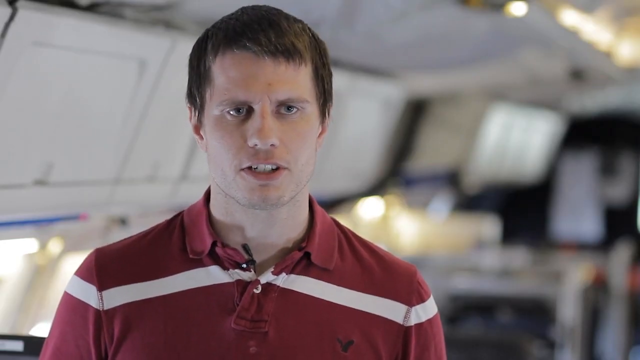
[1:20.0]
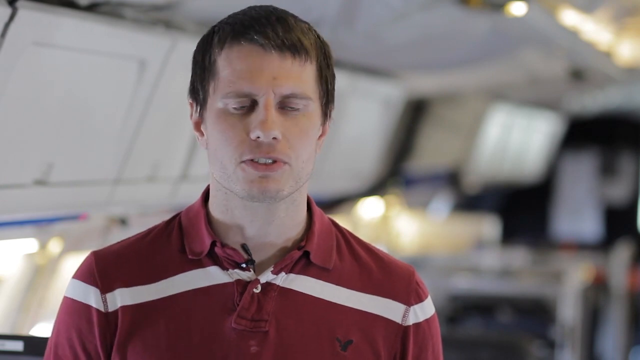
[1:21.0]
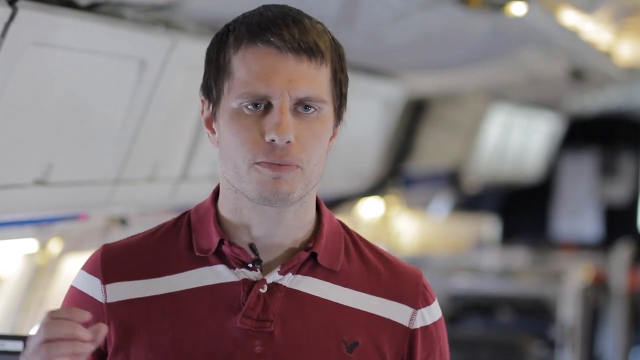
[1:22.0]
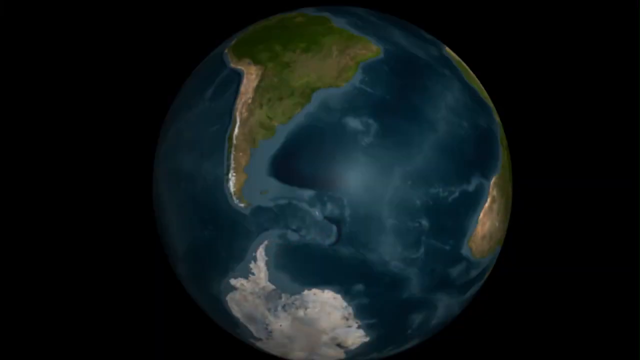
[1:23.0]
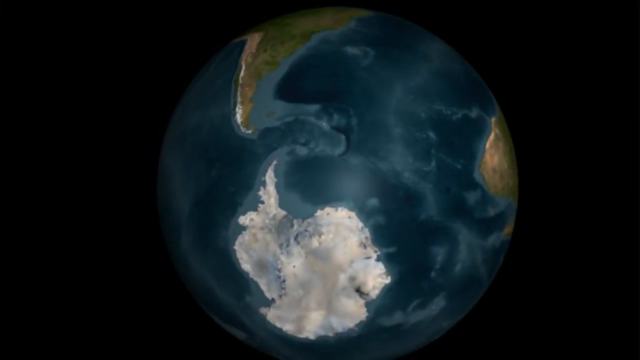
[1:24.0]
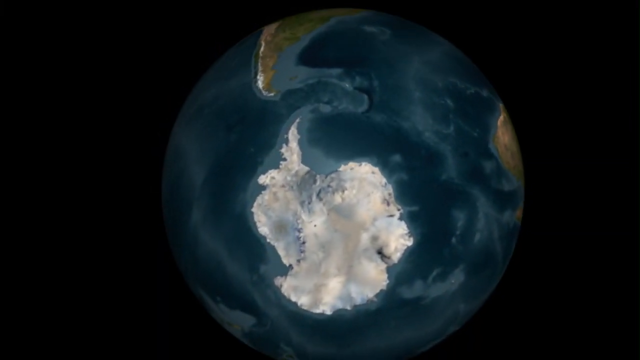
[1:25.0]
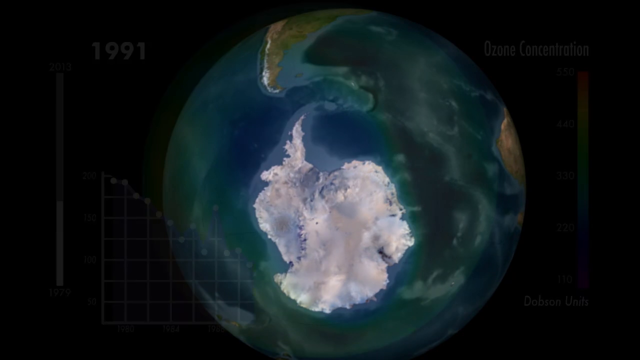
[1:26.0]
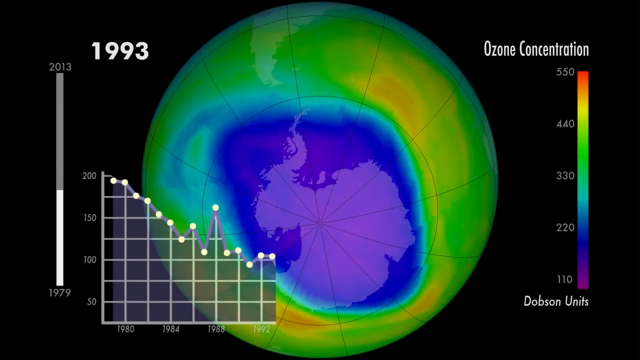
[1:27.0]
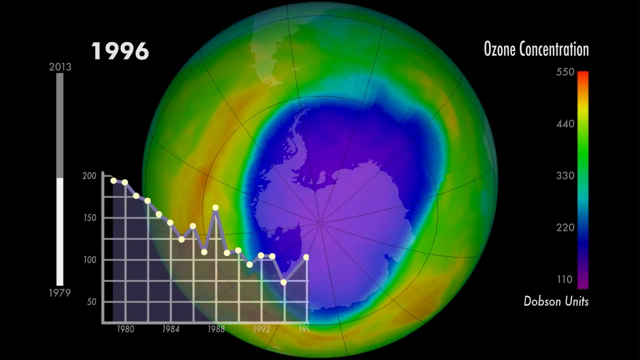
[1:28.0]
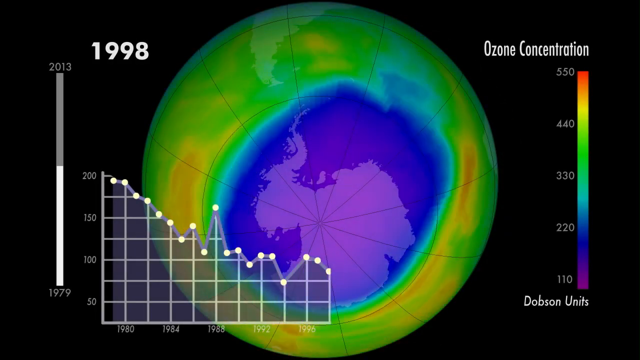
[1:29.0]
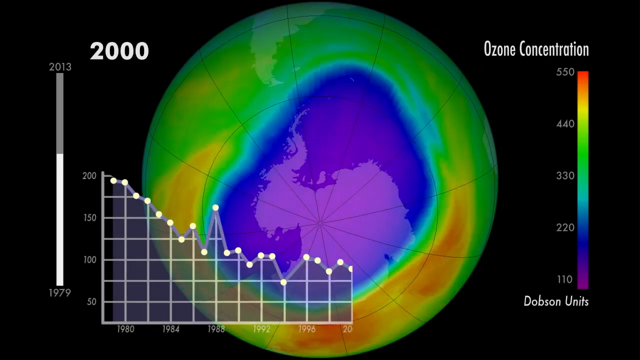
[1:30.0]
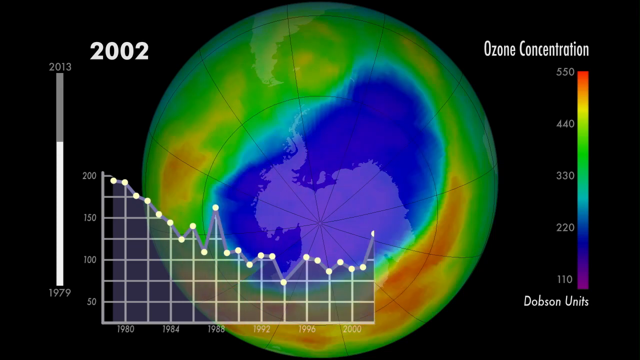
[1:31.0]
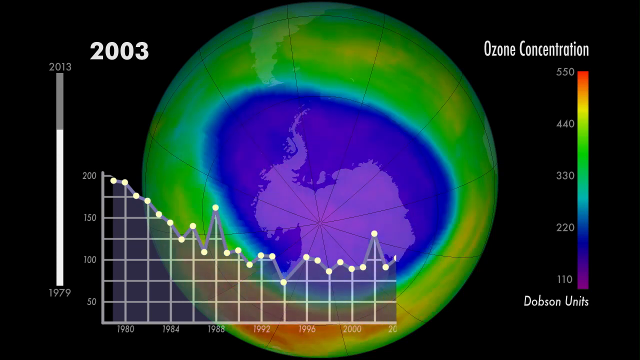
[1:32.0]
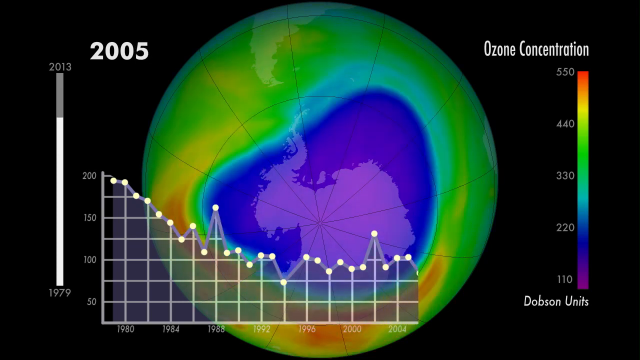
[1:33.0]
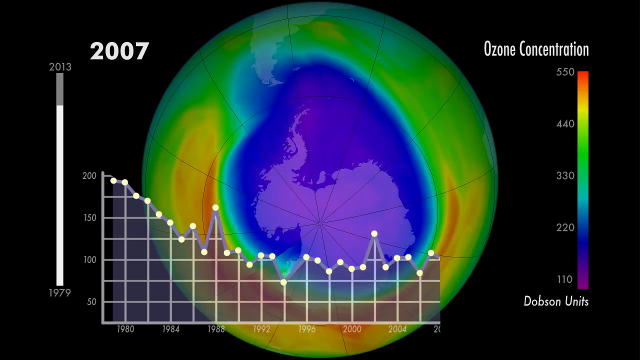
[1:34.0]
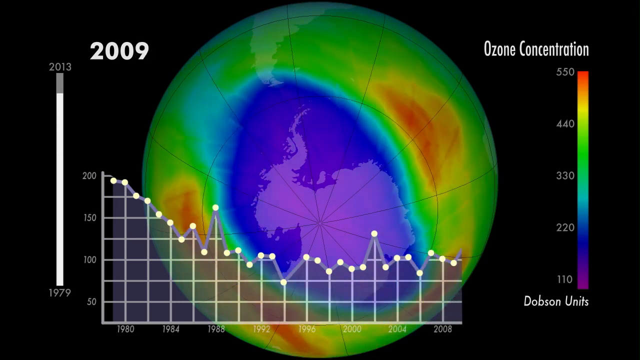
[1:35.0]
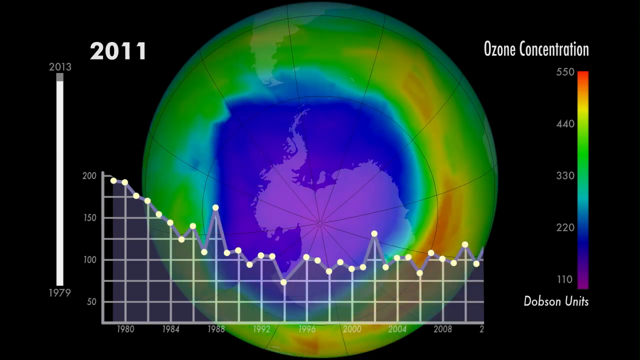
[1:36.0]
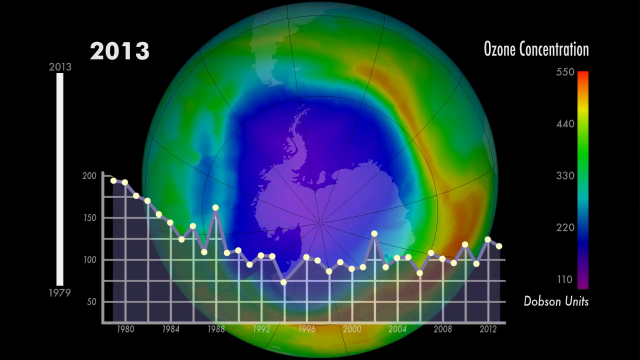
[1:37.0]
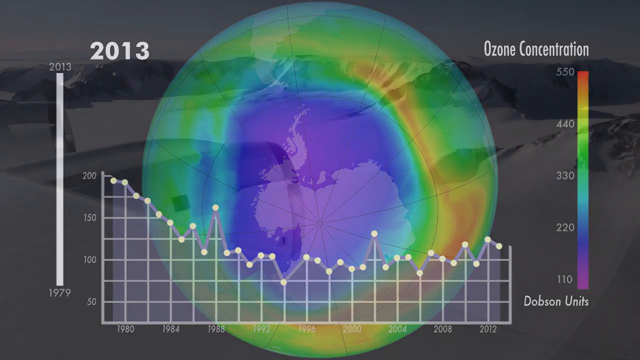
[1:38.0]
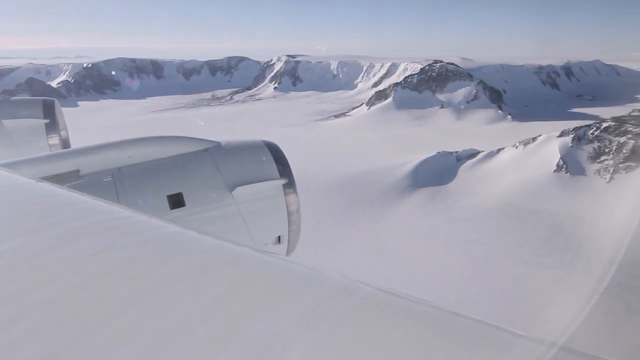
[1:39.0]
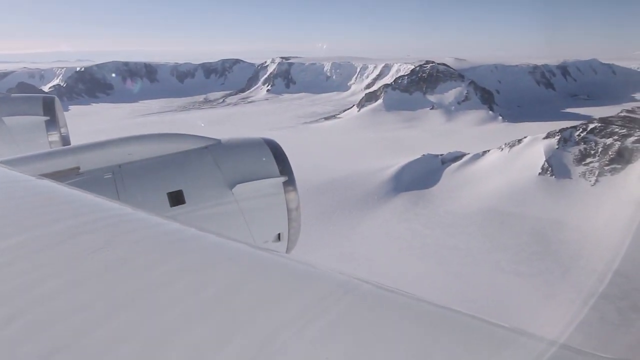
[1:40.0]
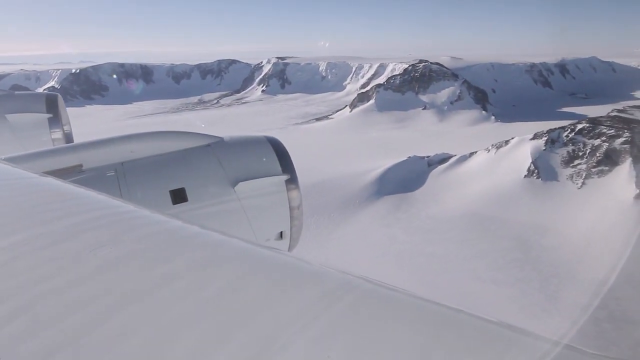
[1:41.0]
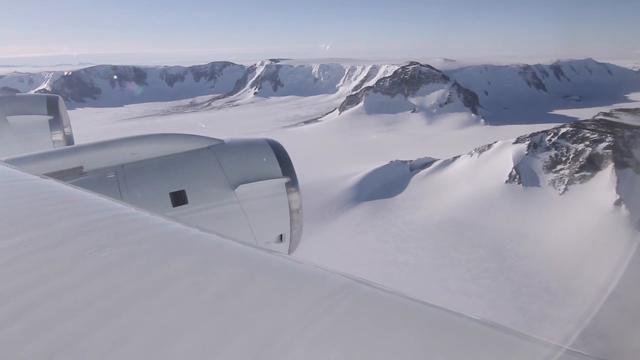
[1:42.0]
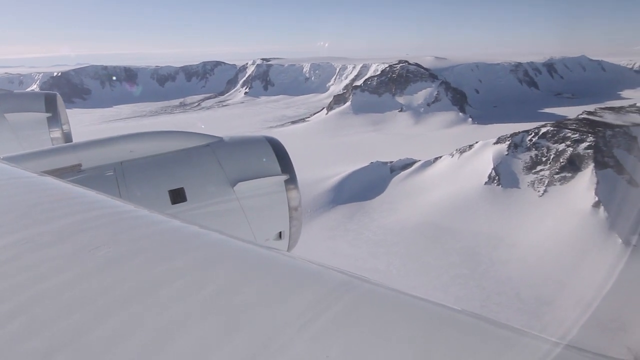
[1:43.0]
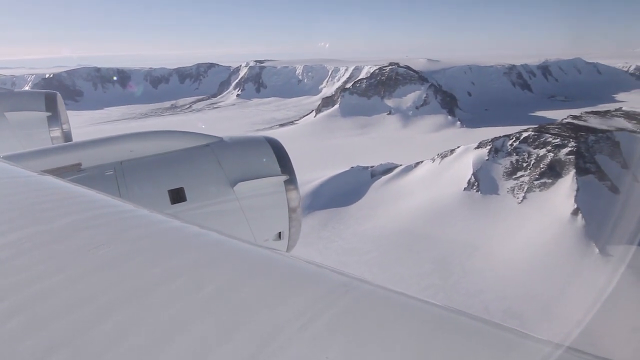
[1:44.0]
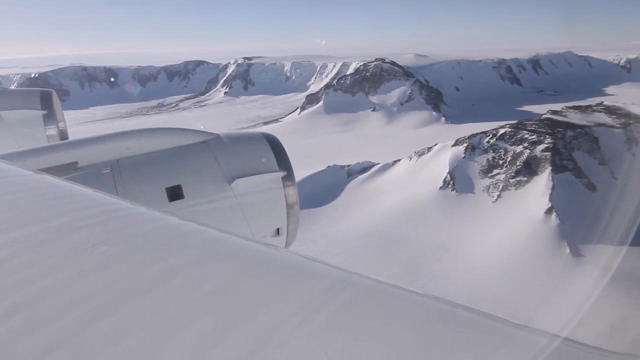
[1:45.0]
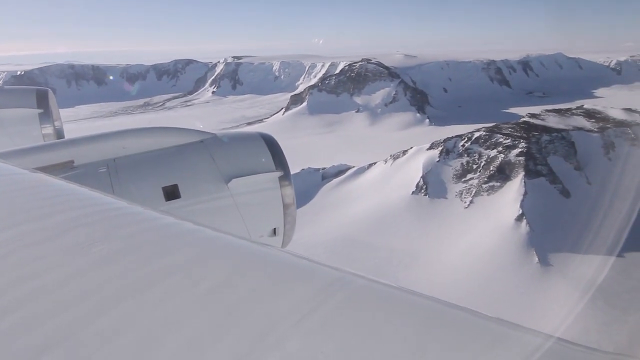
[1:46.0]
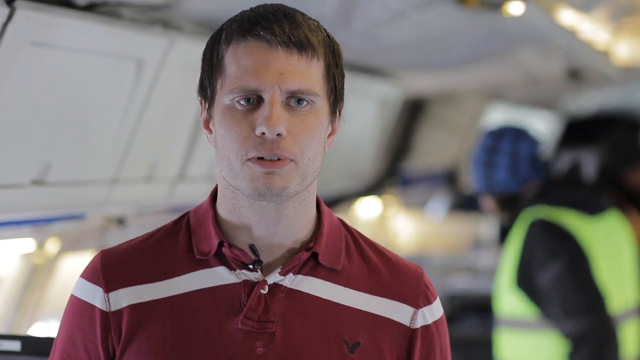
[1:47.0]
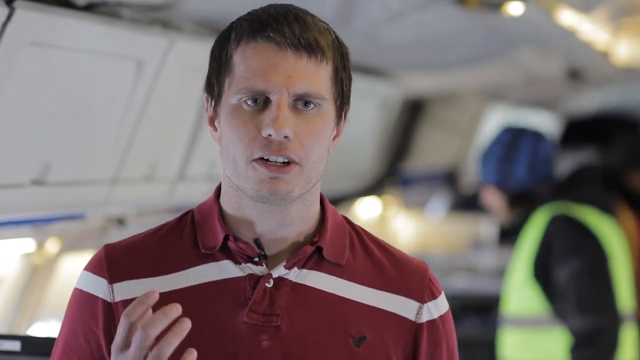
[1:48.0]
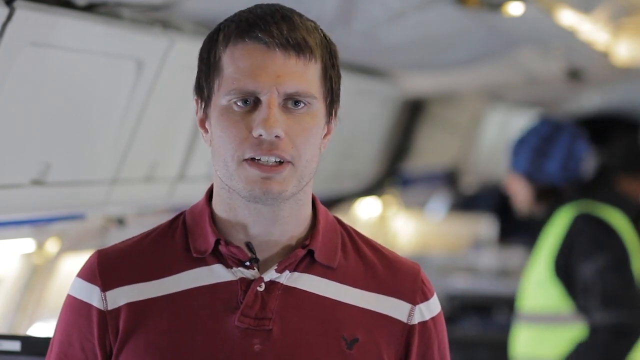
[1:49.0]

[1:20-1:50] A Caucasian man with brunette hair and light-colored eyes, wearing a red and white shirt, talks inside some type of aircraft, with a microphone on his shirt collar. An animated picture of the Earth shows the bottom of the globe, the South Pole and Antarctica, with its ice area. It then shows the ozone concentration from 1992 and how temperatures got hotter over the years as the ozone concentration got worse. Next, a view out of an airplane shows an icy tundra area, possibly Antarctica, with many mountains and a lot of snow and ice; the side of the plane, which is white, is also visible. The view returns to the man in the red and white shirt, who keeps talking.